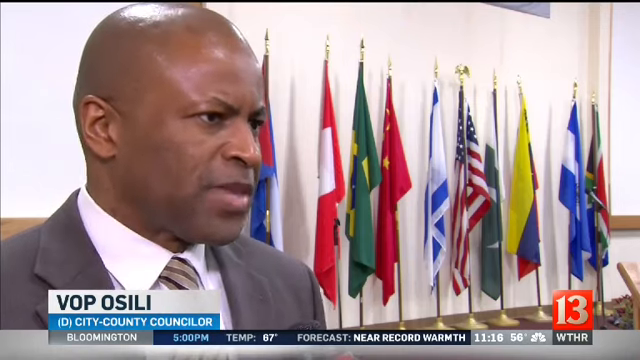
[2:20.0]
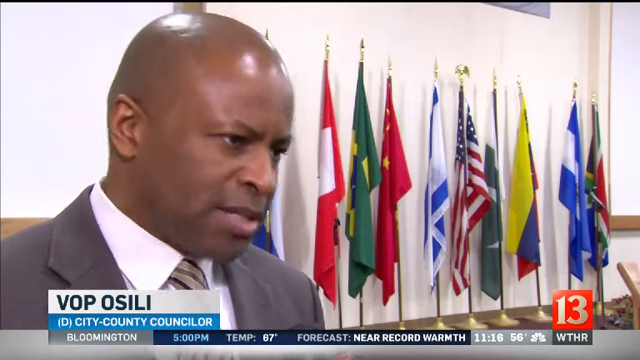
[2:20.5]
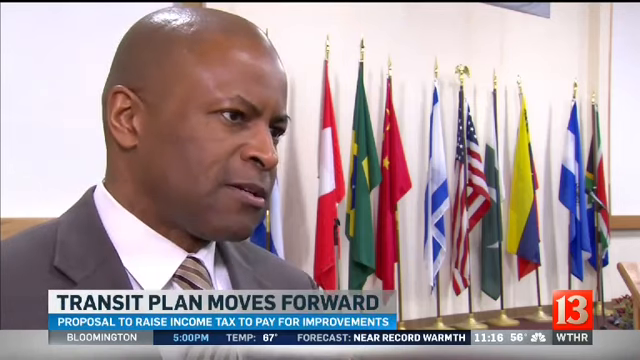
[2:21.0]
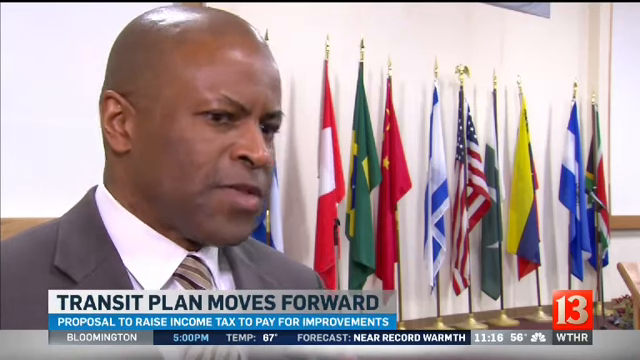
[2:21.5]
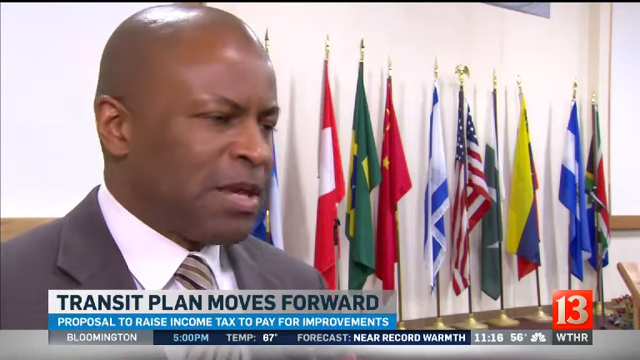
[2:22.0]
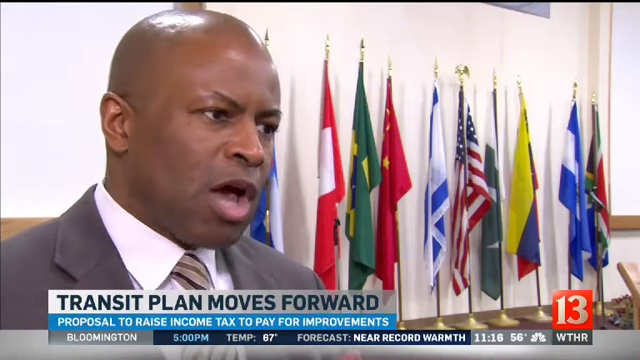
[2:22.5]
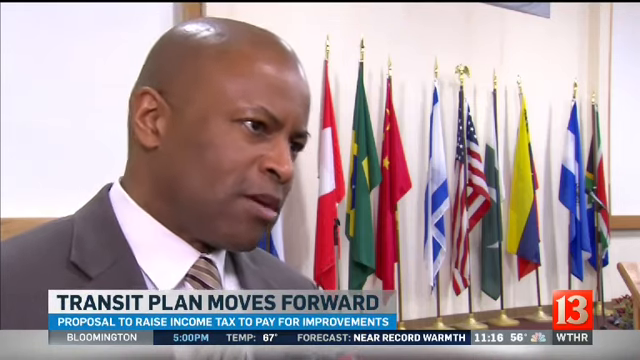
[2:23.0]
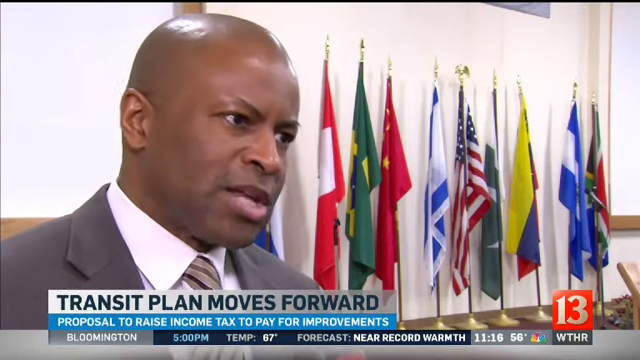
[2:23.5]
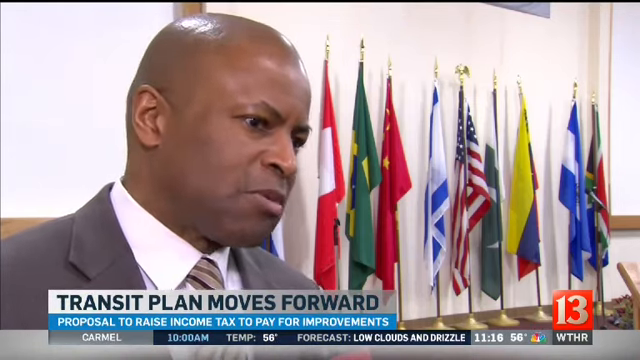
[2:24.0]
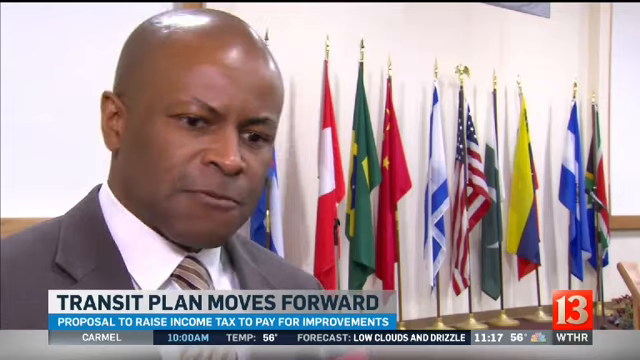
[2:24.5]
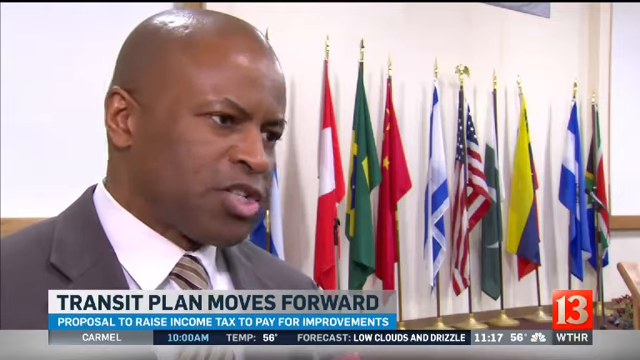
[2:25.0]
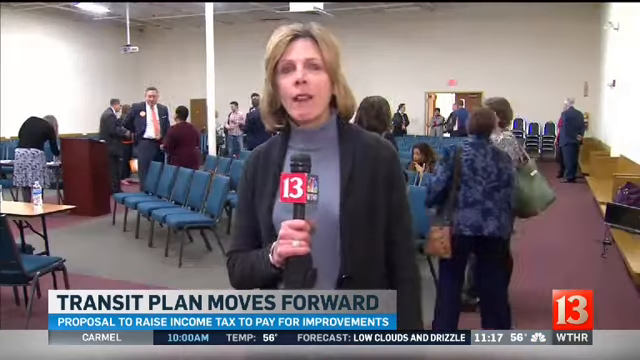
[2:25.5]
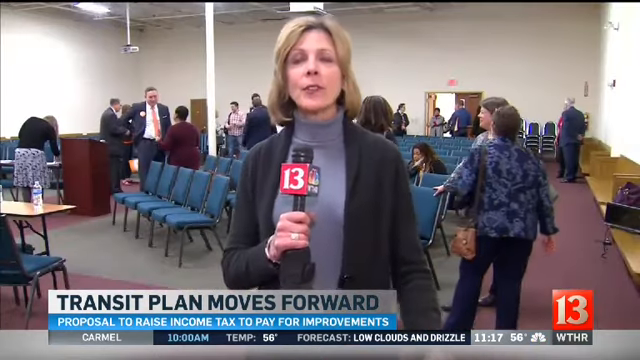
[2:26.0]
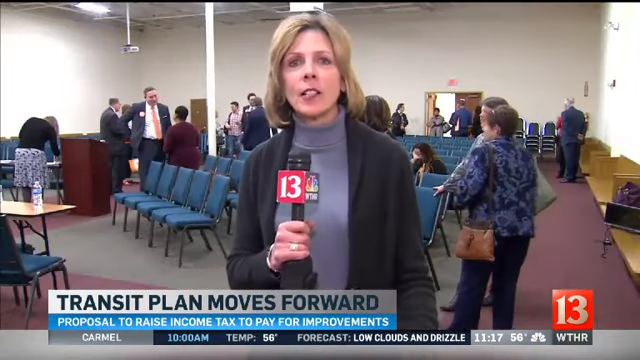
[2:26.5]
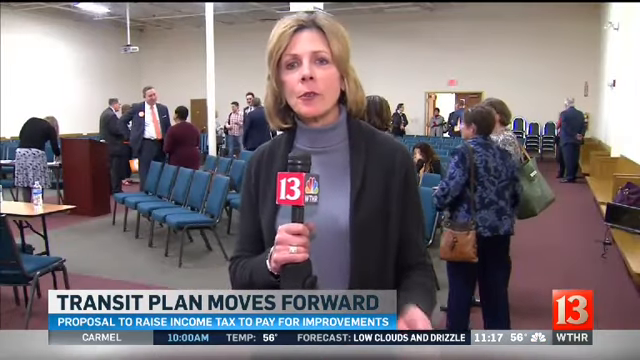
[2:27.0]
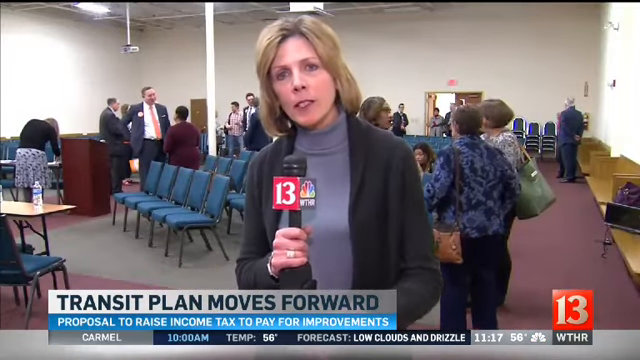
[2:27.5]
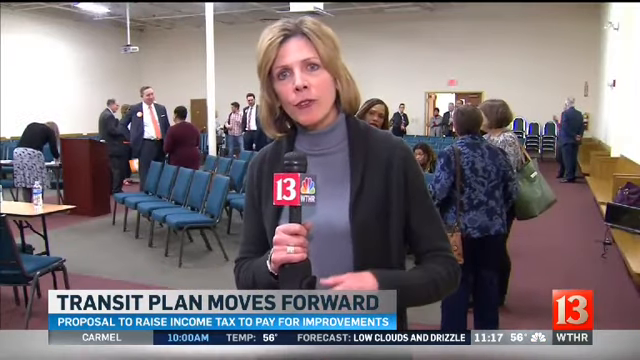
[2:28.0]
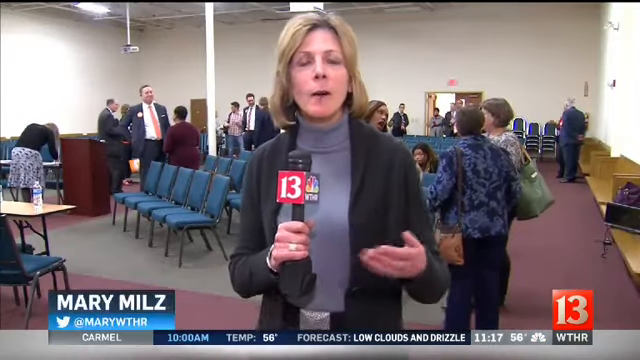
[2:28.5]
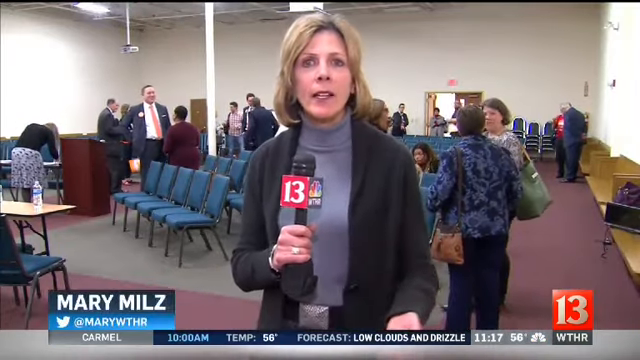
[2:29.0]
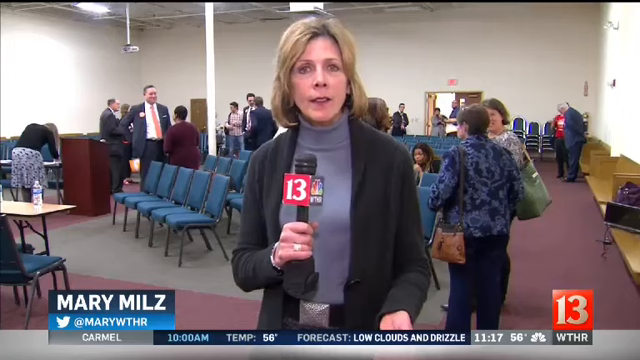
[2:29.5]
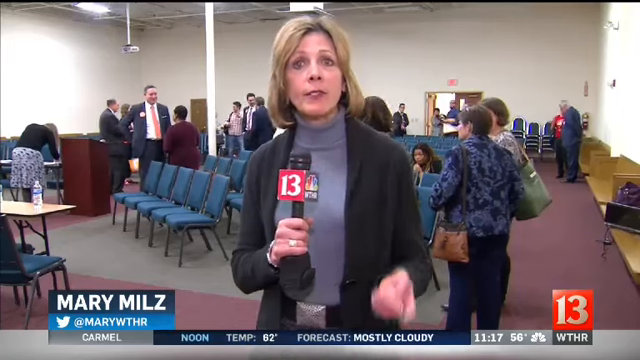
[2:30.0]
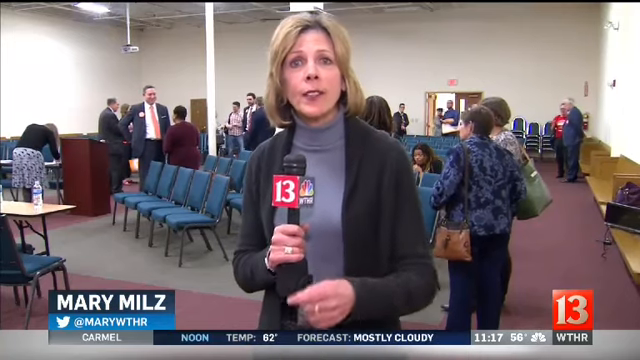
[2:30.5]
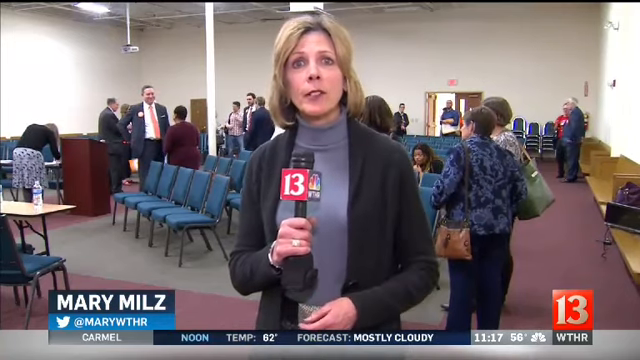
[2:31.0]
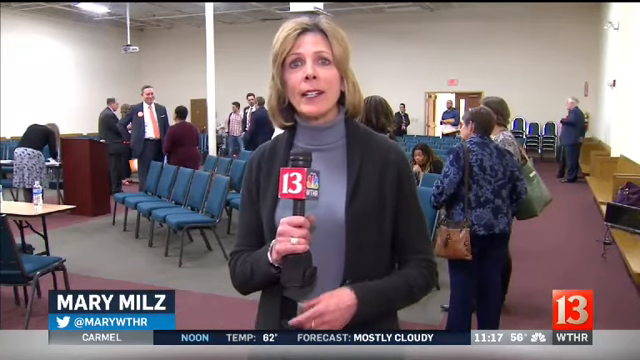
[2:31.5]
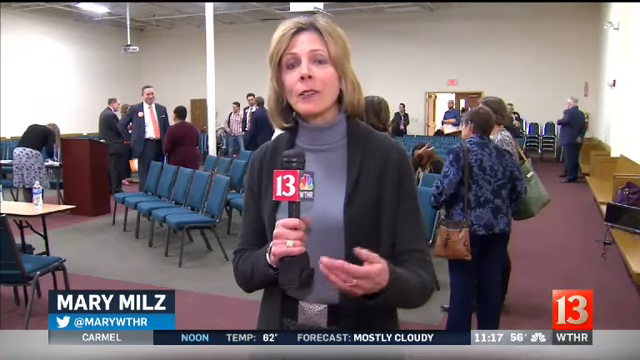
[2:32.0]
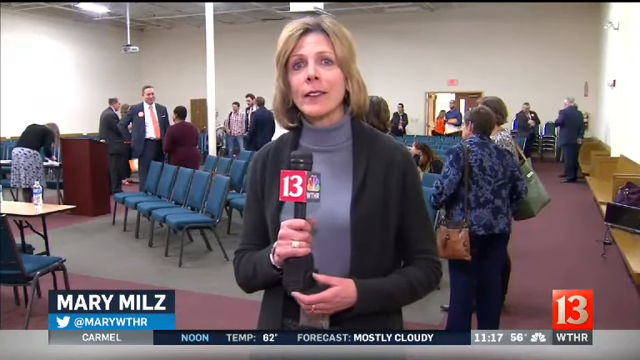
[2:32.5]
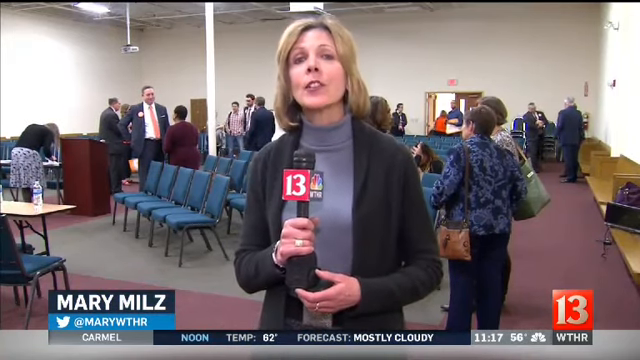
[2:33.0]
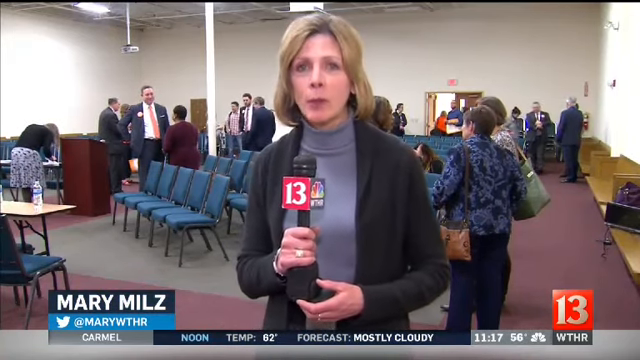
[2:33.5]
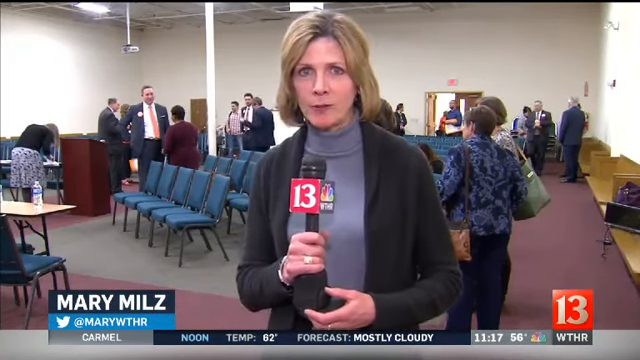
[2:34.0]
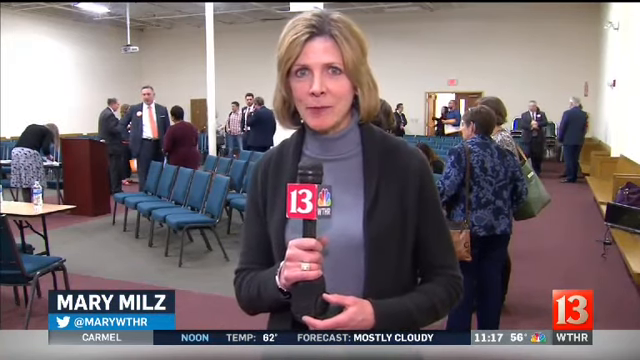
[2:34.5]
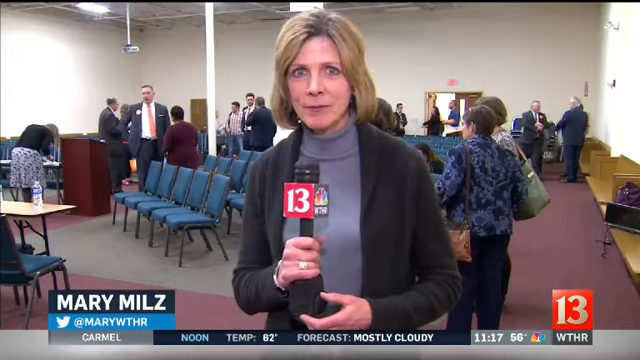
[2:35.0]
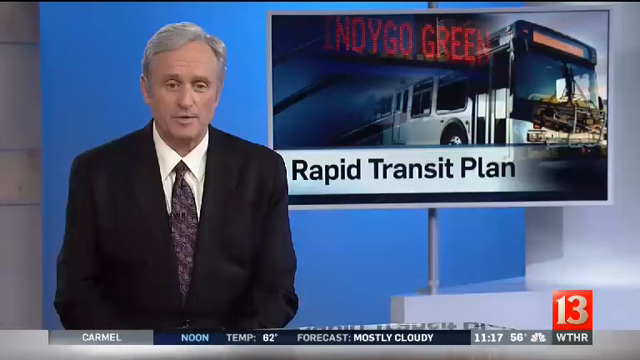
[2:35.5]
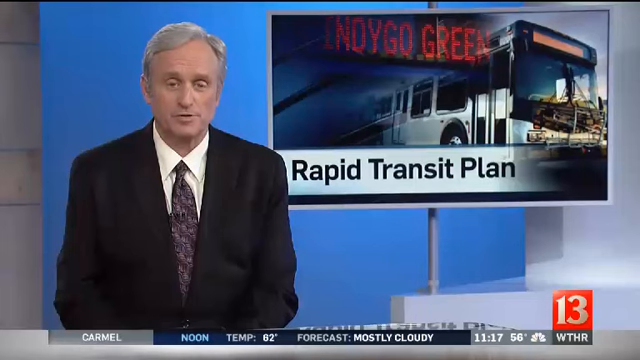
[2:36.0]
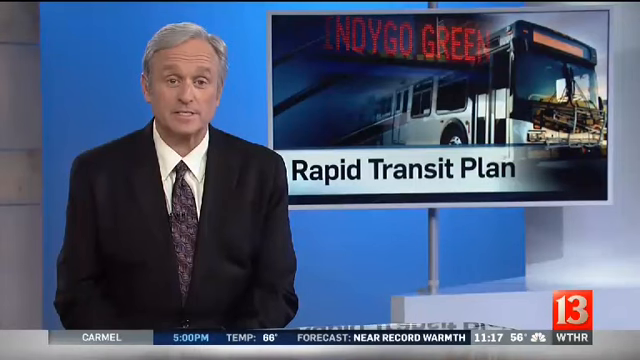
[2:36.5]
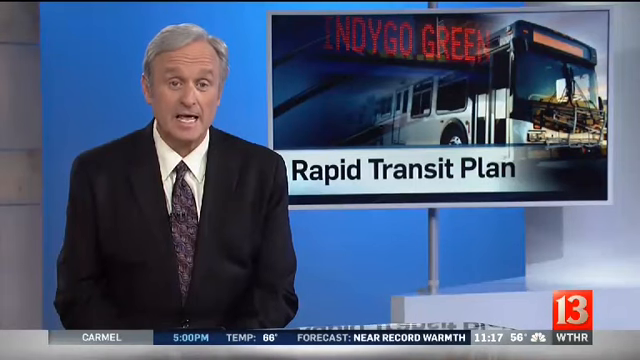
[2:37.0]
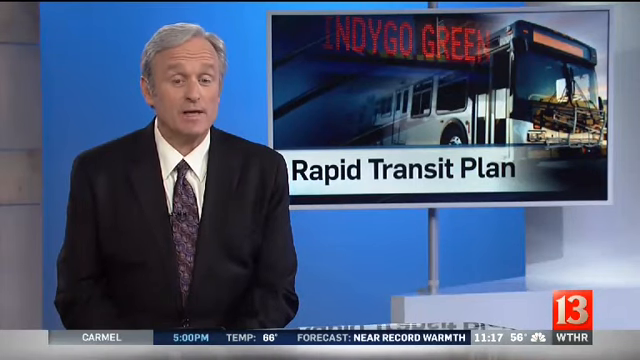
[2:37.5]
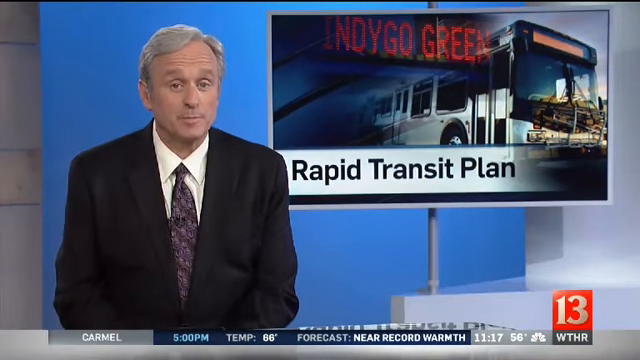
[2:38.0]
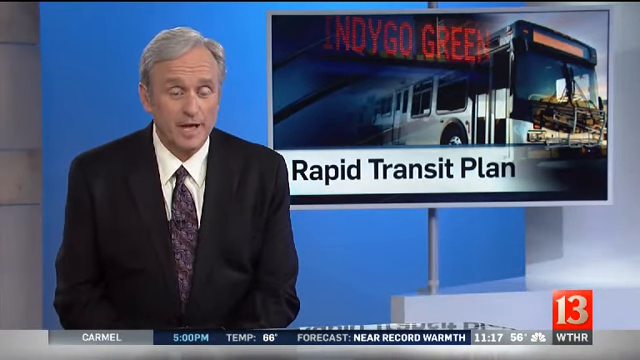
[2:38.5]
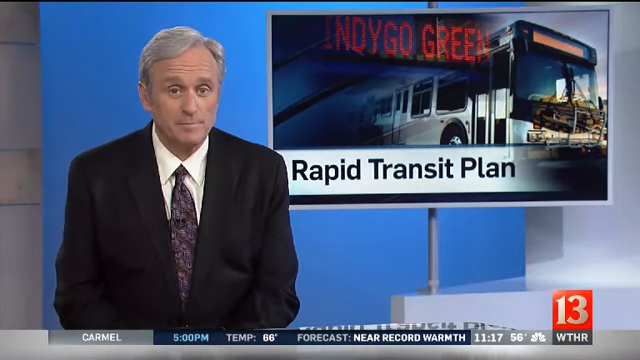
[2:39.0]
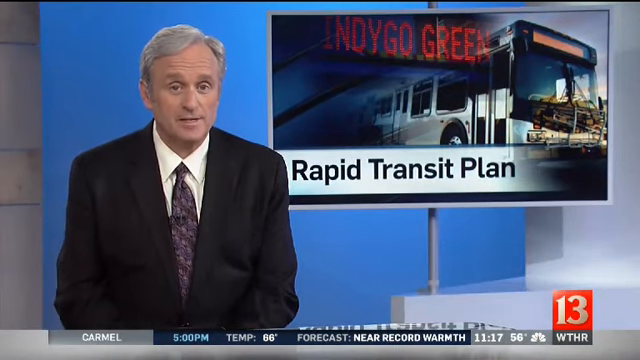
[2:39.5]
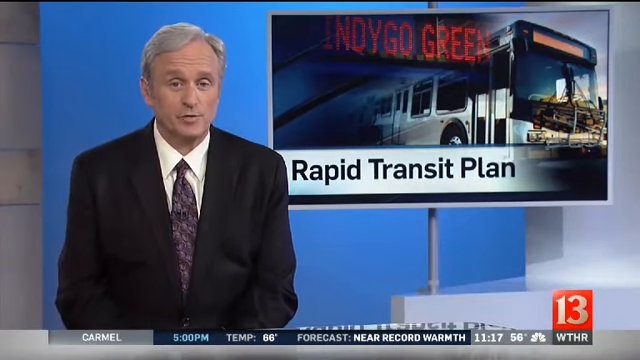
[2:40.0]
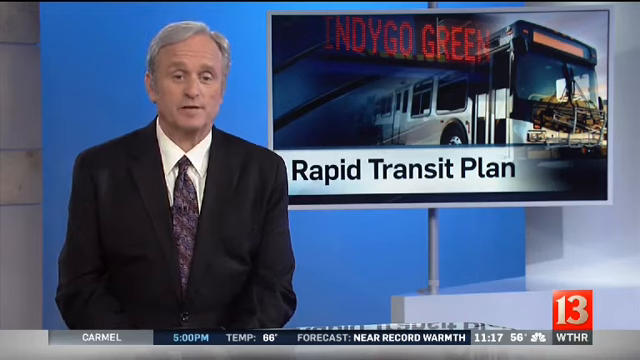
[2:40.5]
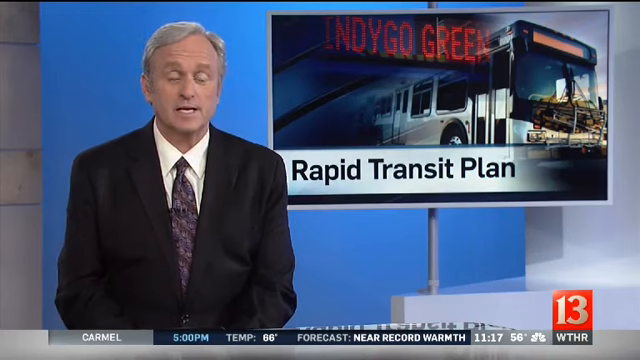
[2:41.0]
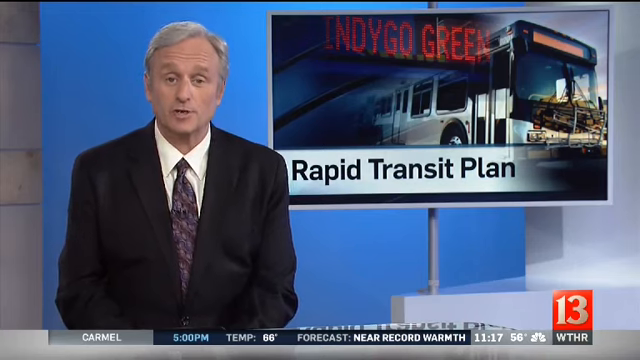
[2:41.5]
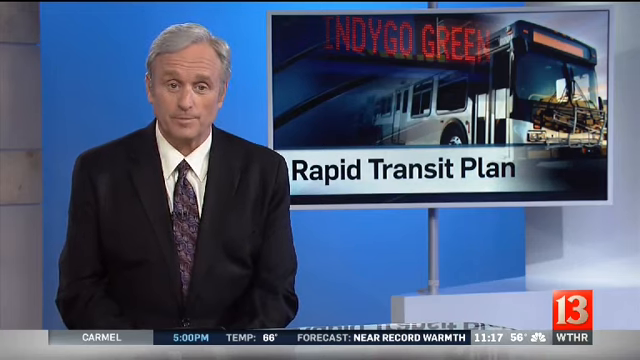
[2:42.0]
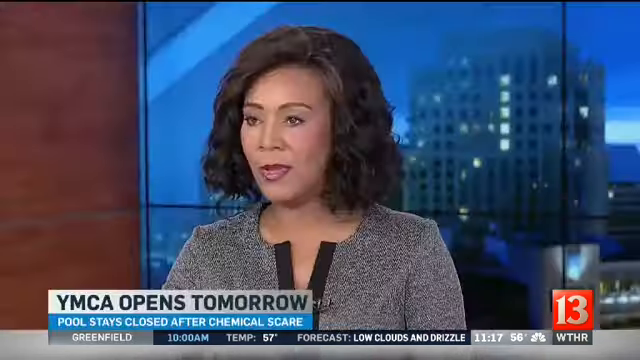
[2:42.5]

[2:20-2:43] A bald black man in a gray suit, a white shirt and a striped gray tie is standing in front of a wall of very colorful flags that seem to be from many different countries, including the American flag and what looks like the Brazilian flag, all folded up. A white bar at the bottom gives his name as "Vop Ossoli", with "D city county councilor" underneath and, below that, information about the time and the forecast for different cities. A red square in the lower right has the number 13 in it. A newswoman with fried blonde hair, a light blue turtleneck and a black blazer holds a microphone with 13 in a red square along the side. It looks like some kind of city council meeting, with blue chairs set up and people milling about, and text gives her name: "Mary Hills, at Mary WTHR". The shot cuts to a man with close-cropped gray hair in a black blazer, a white shirt and a purple tie, in front of a presenting screen showing a bus and the words "Indy, go green, rapid transit plan"; he talks while blinking a lot. It then moves to a woman with short dark hair, burgundy lips and a silver top, and a white bar pops up saying "YMCA opens tomorrow".